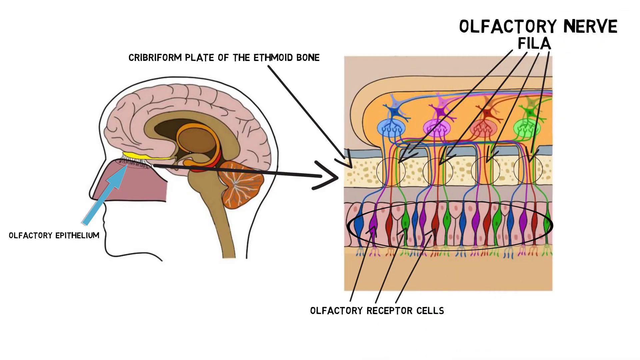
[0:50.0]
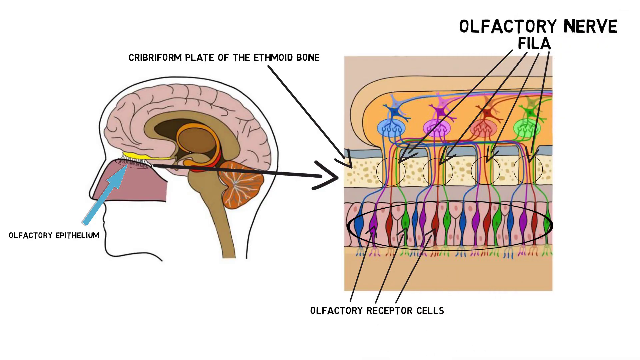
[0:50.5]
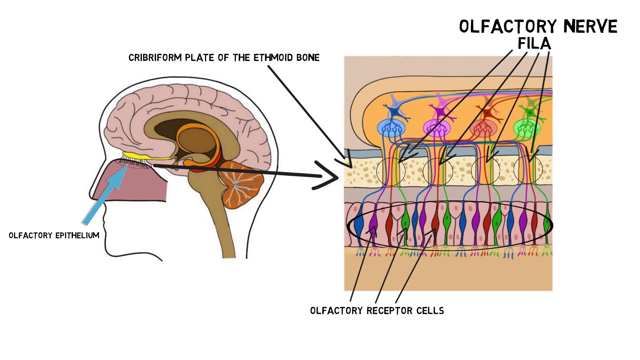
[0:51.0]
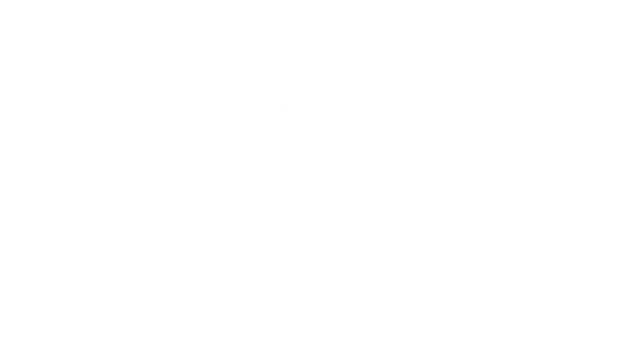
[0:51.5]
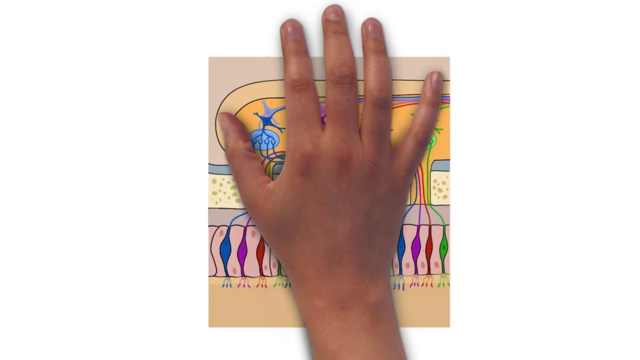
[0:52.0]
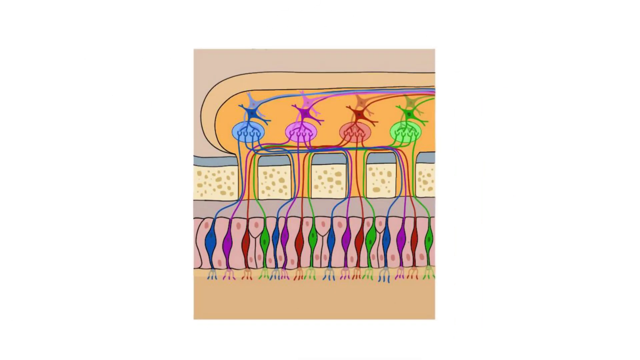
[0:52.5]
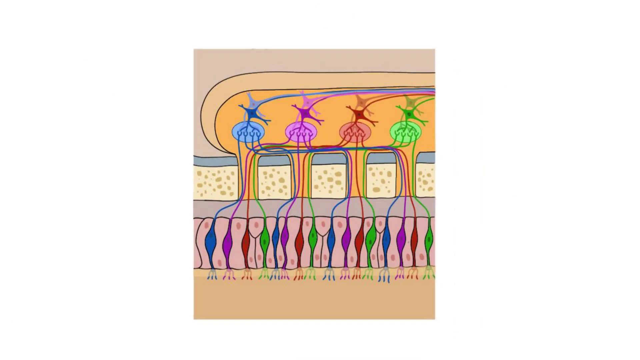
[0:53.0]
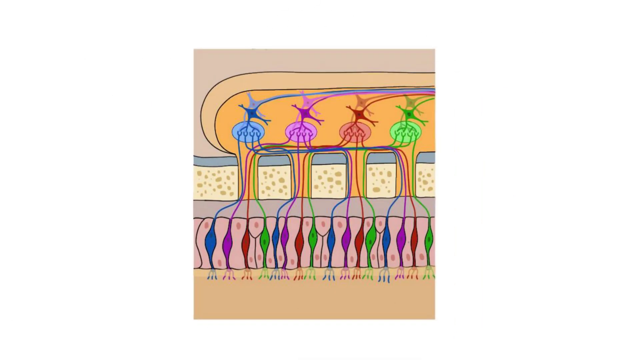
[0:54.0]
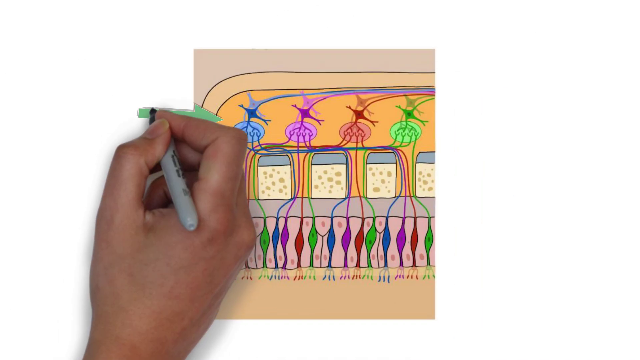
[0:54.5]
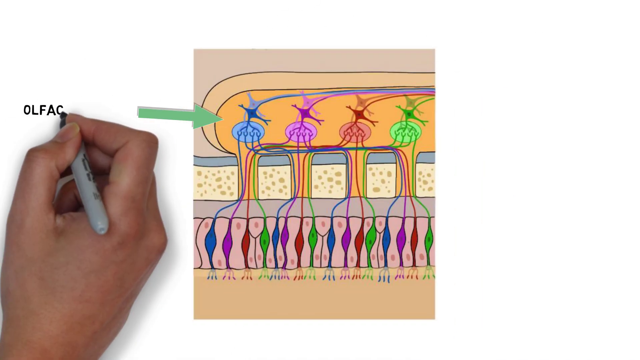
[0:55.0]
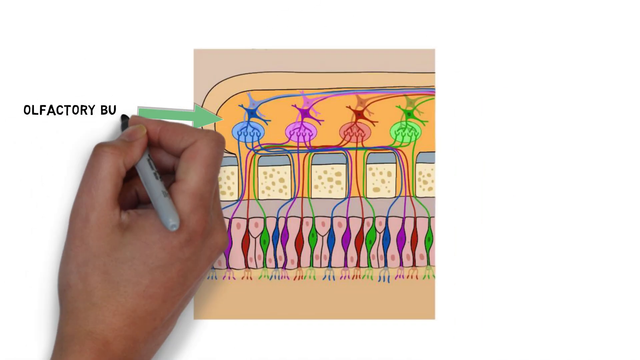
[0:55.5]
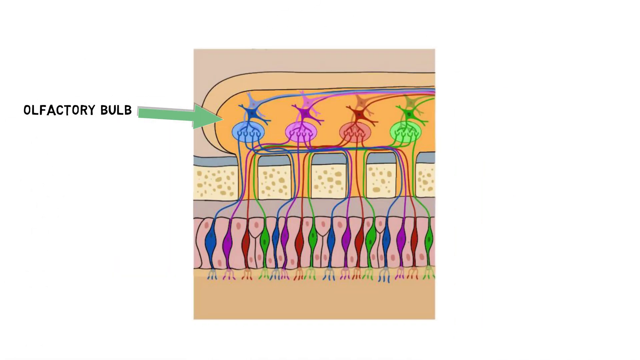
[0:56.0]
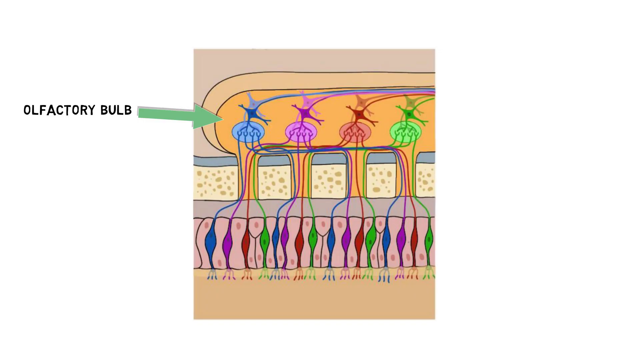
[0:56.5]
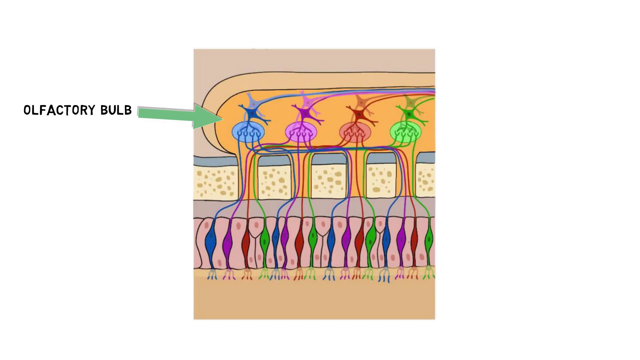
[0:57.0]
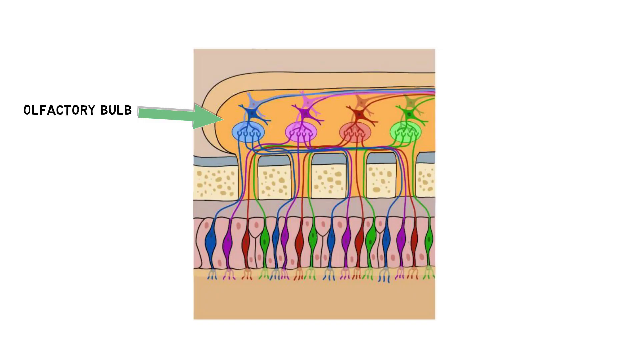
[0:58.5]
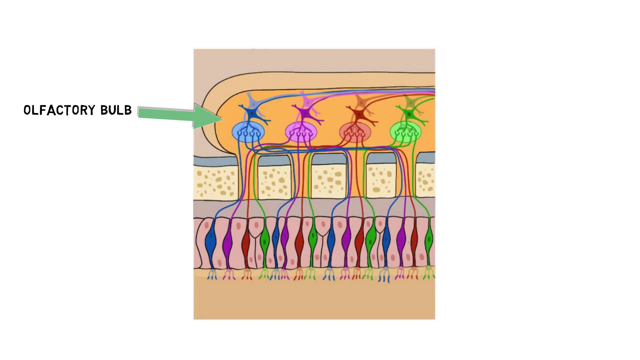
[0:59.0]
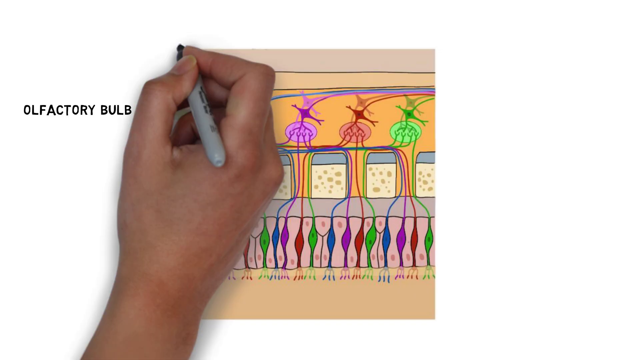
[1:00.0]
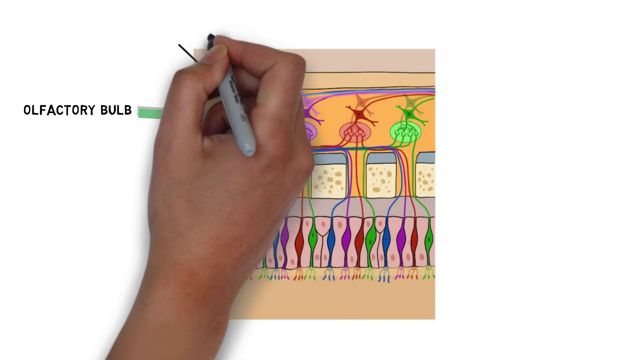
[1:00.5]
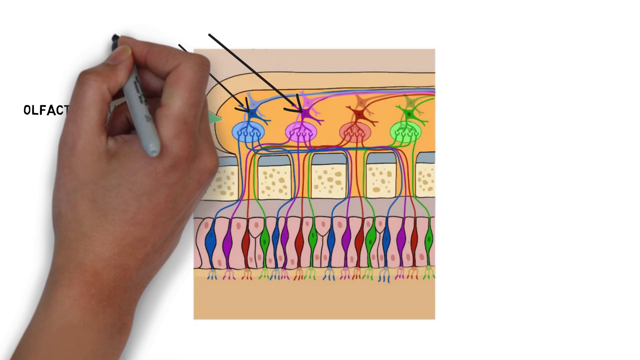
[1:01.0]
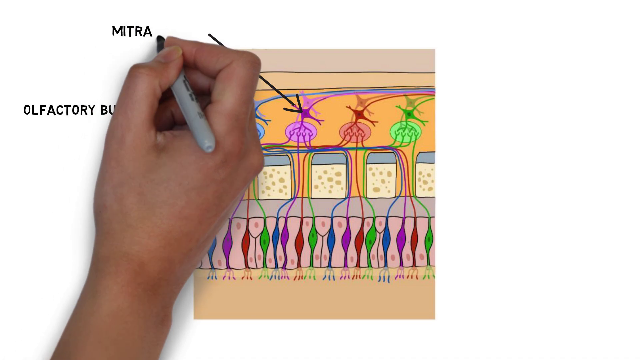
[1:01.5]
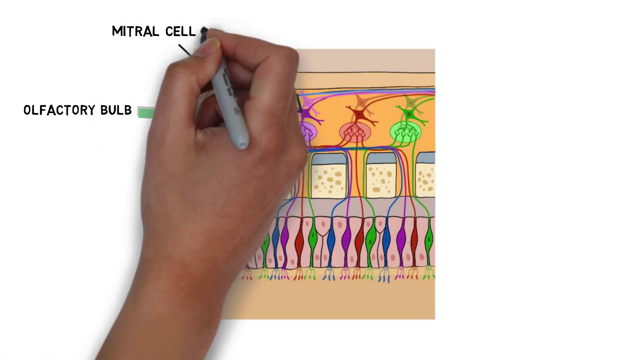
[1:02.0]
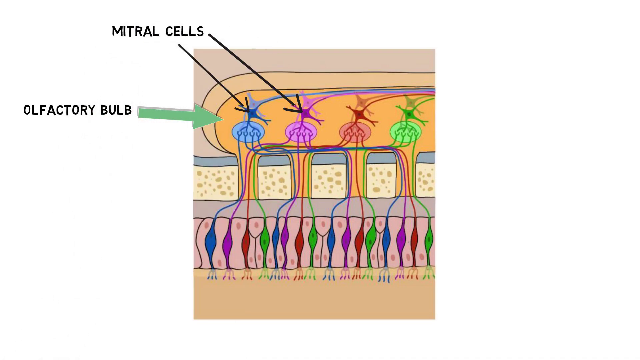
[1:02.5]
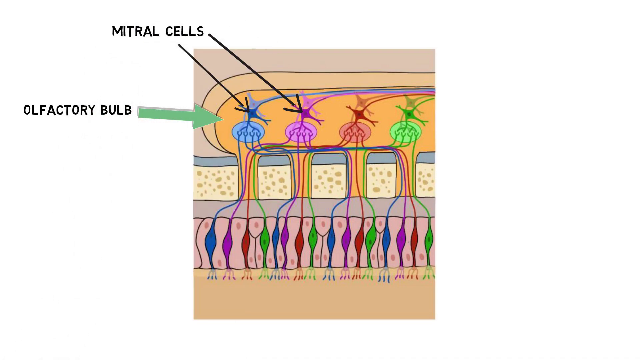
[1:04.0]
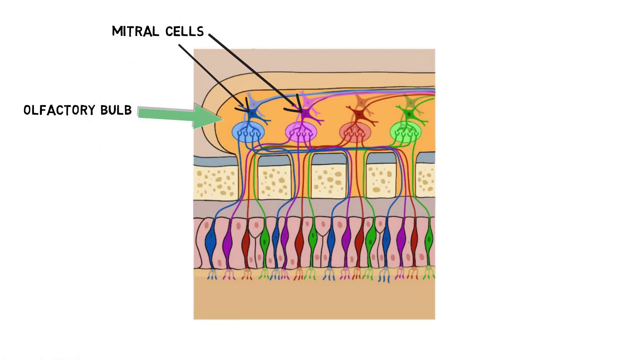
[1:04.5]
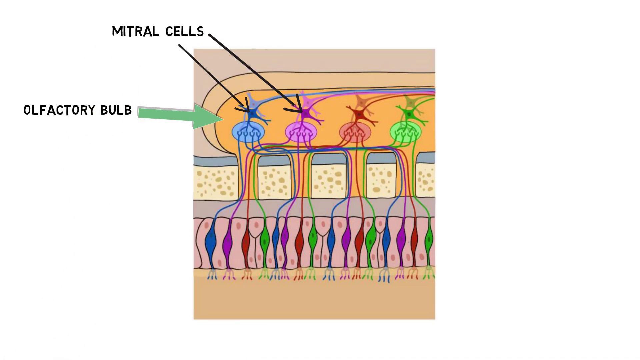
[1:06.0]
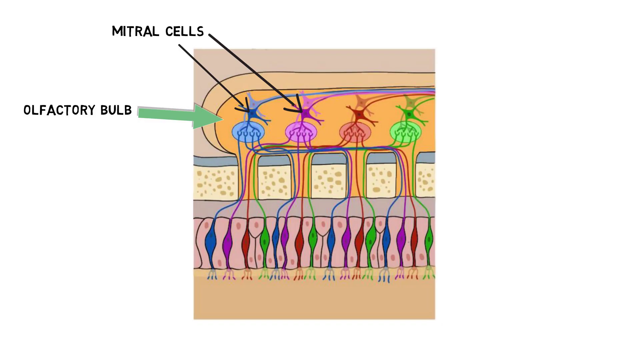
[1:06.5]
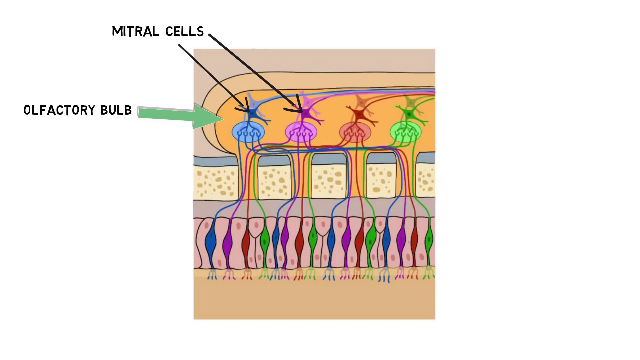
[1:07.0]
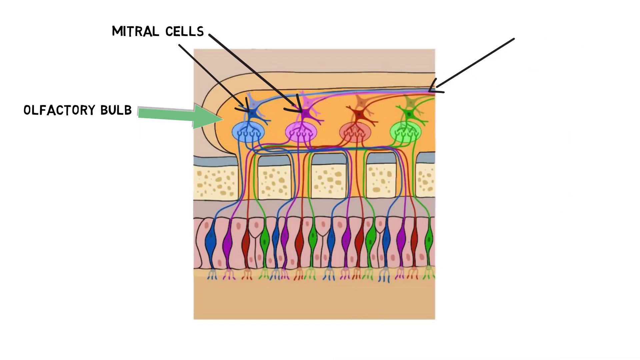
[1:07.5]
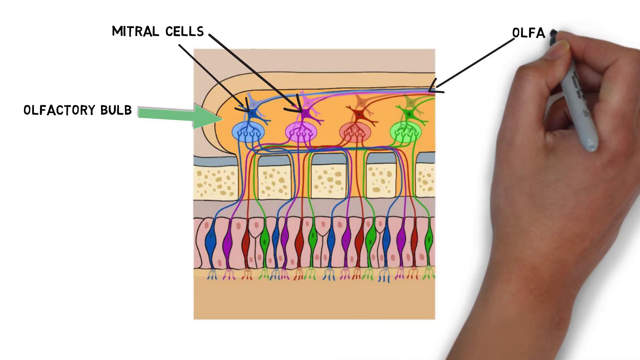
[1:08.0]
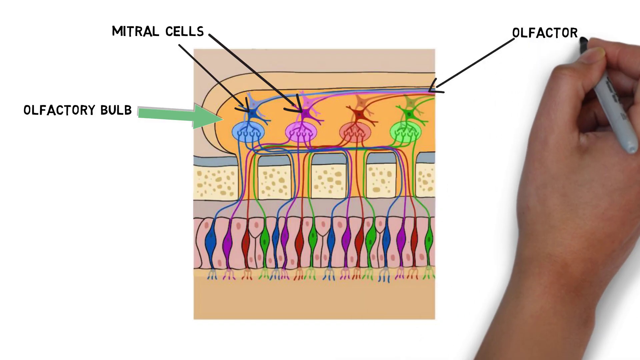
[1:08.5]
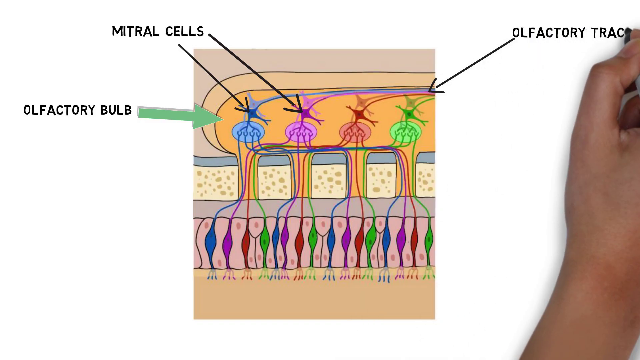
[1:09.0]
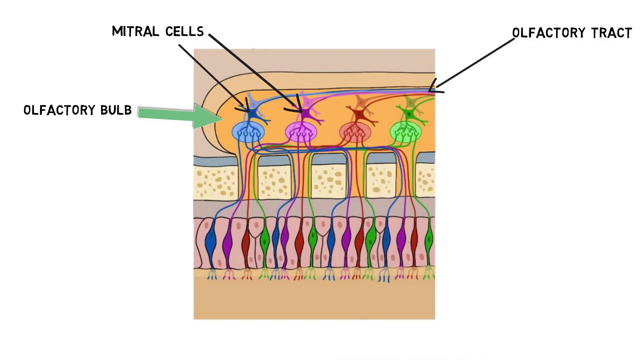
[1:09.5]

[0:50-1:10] He erases part of the drawing, and the view moves closer to the olfactory bulb. He labels the mitral cells and the olfactory tract. The drawing zooms in to the smallest parts, labels them, and then shows them in the bigger picture: the olfactory nerve with the olfactory bulb, the mitral cells and the olfactory tract.